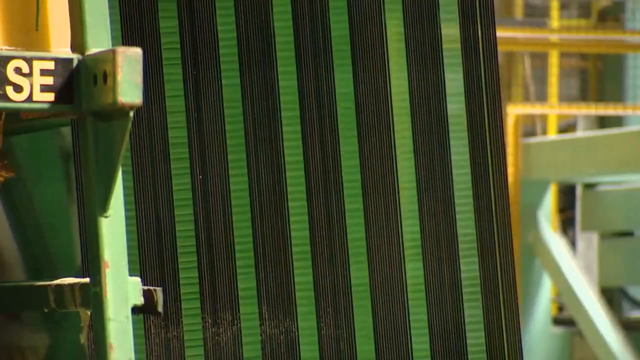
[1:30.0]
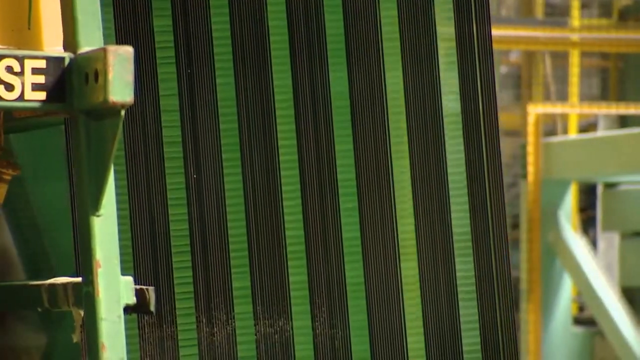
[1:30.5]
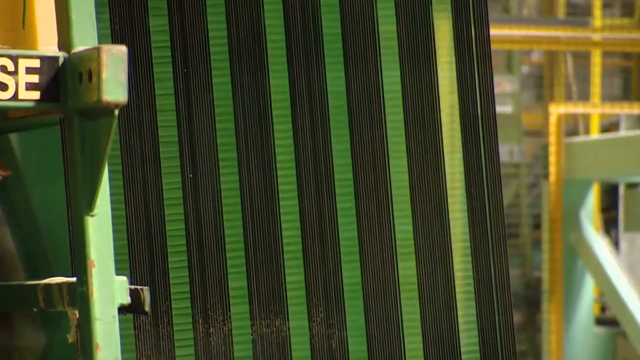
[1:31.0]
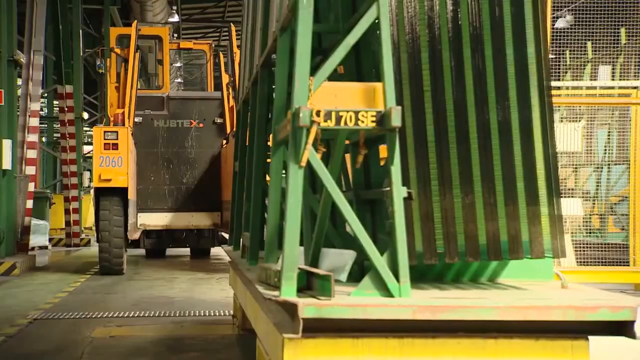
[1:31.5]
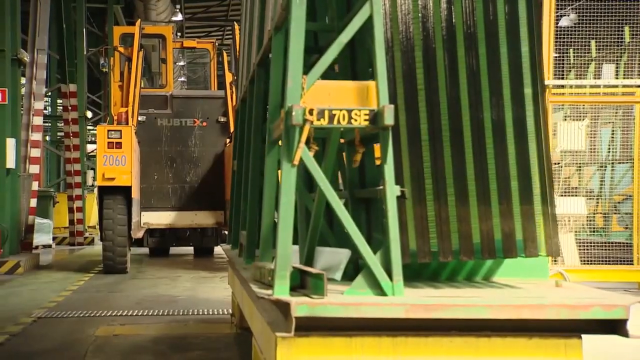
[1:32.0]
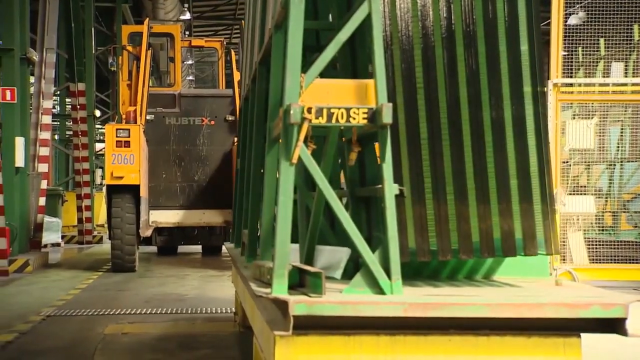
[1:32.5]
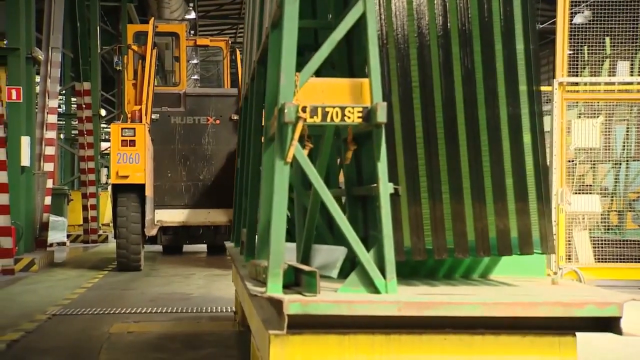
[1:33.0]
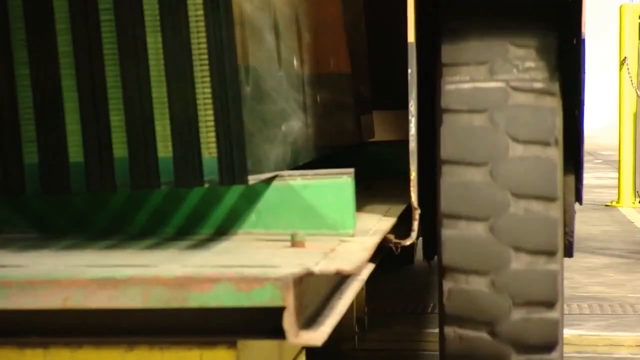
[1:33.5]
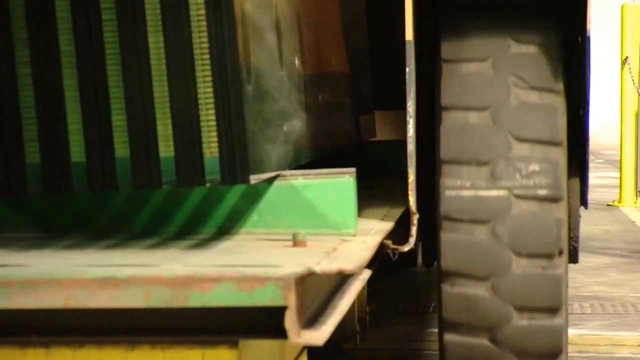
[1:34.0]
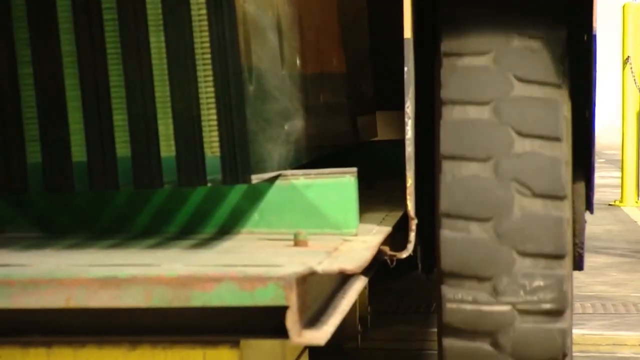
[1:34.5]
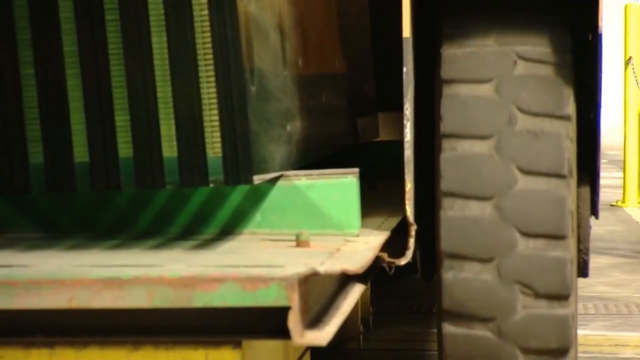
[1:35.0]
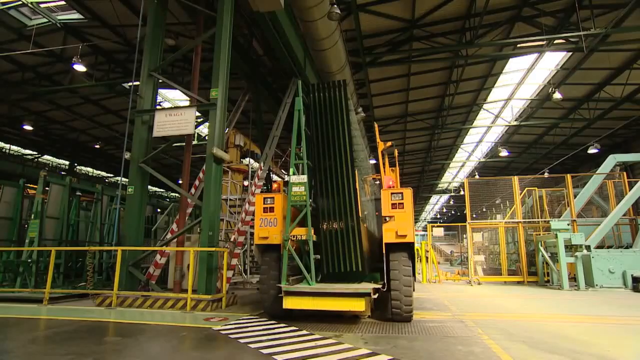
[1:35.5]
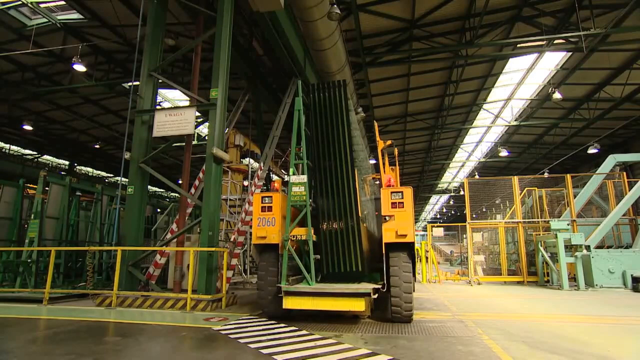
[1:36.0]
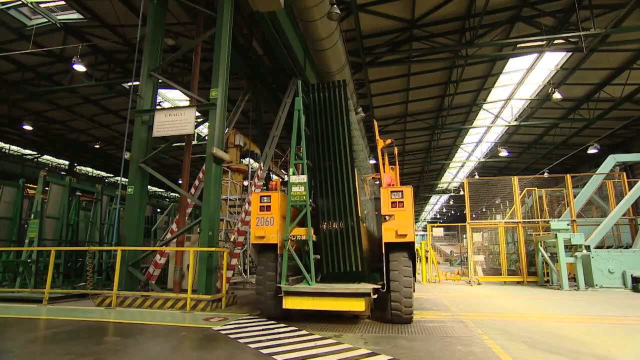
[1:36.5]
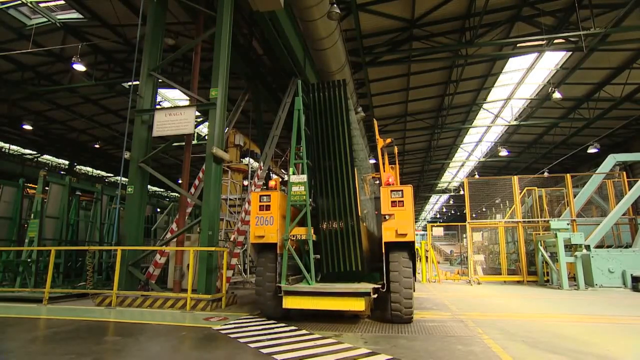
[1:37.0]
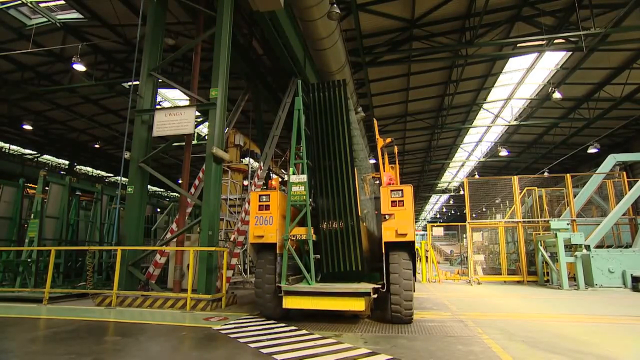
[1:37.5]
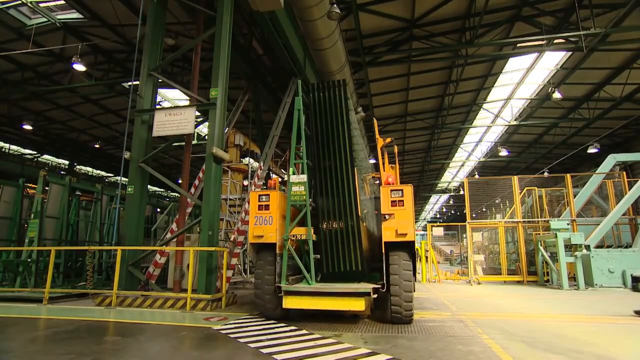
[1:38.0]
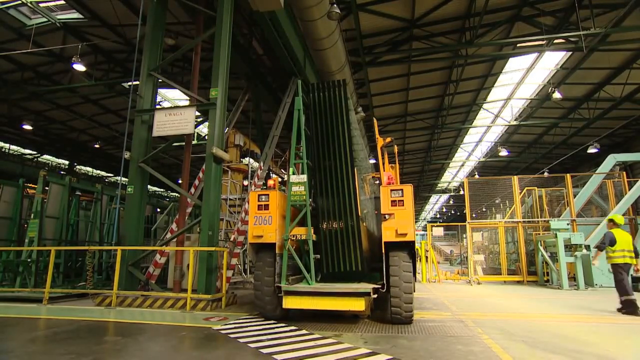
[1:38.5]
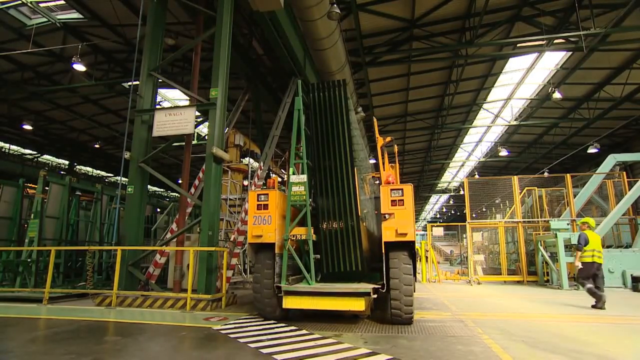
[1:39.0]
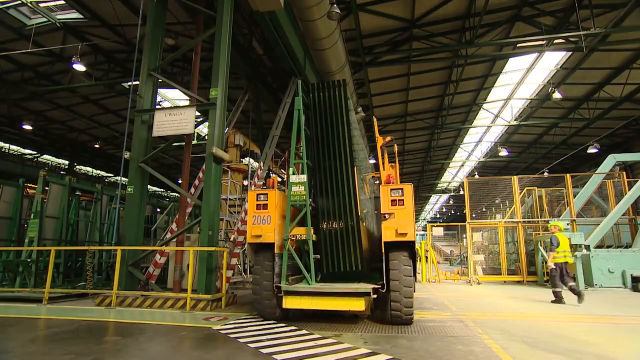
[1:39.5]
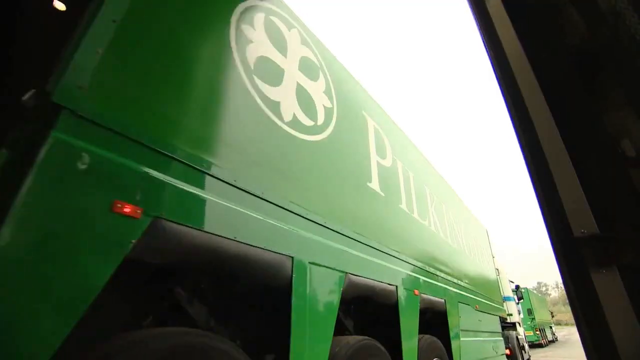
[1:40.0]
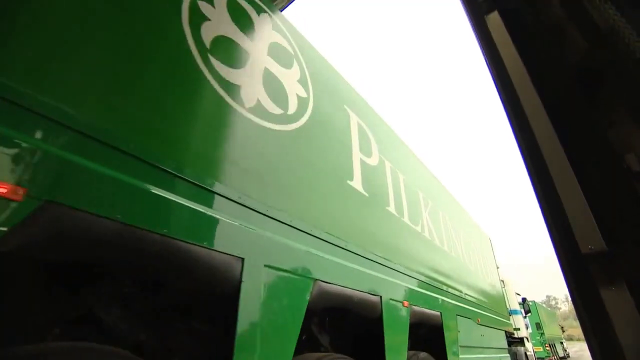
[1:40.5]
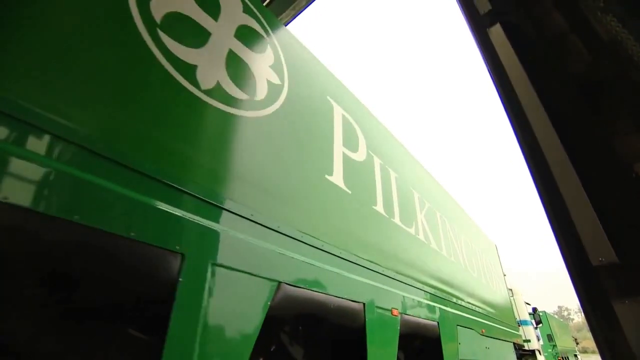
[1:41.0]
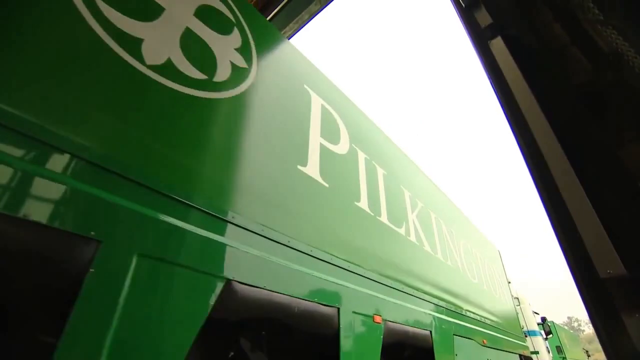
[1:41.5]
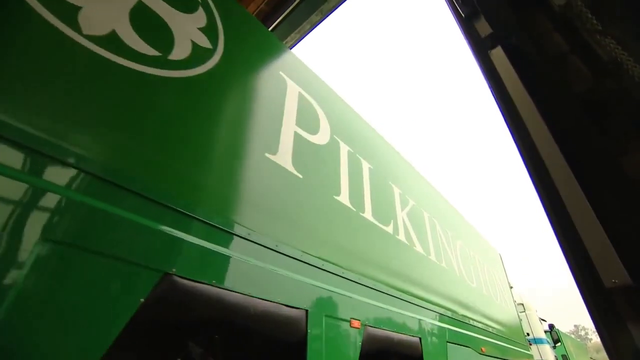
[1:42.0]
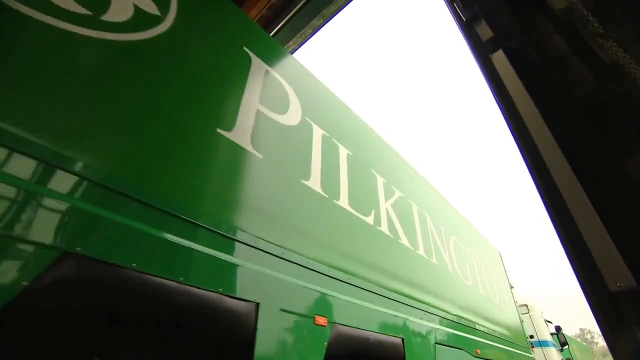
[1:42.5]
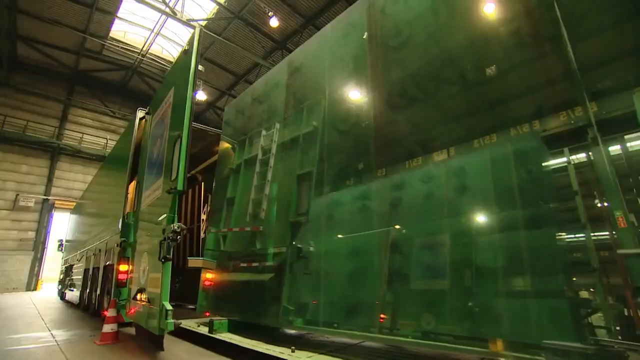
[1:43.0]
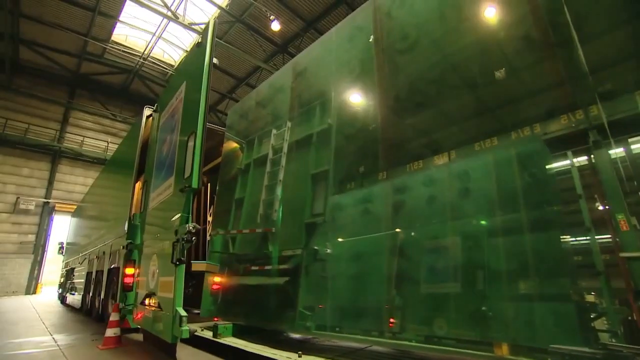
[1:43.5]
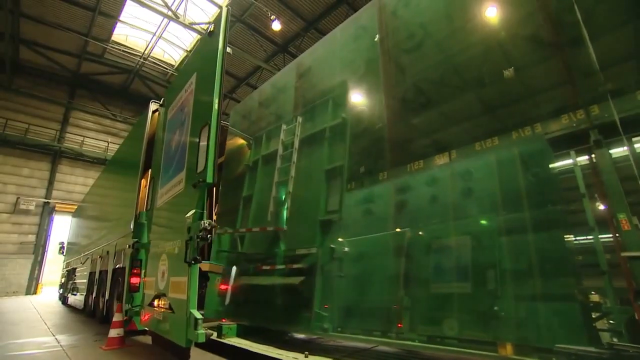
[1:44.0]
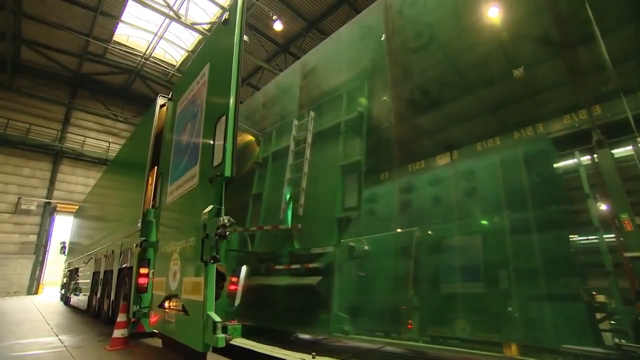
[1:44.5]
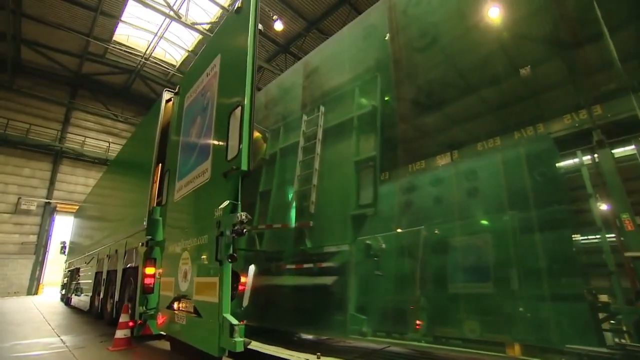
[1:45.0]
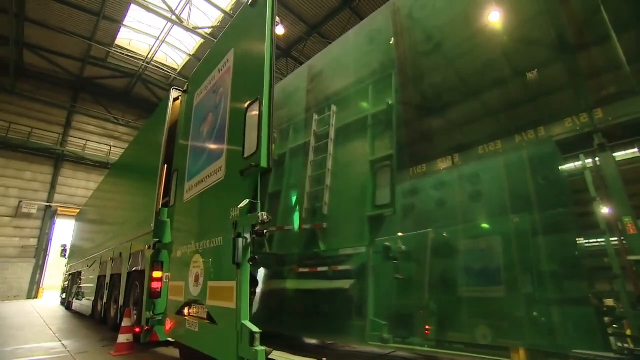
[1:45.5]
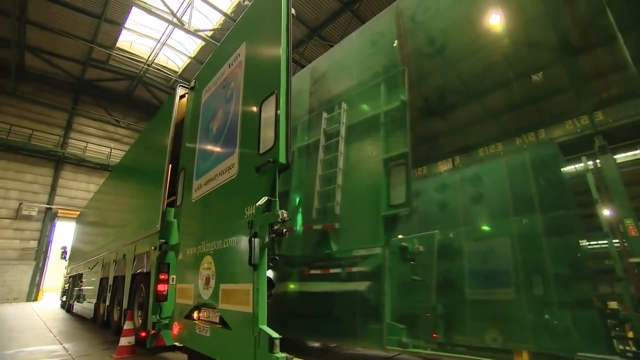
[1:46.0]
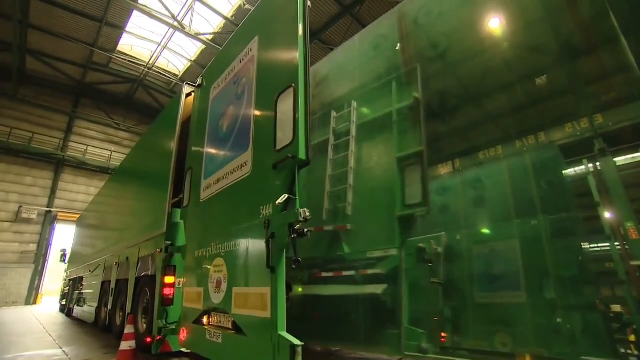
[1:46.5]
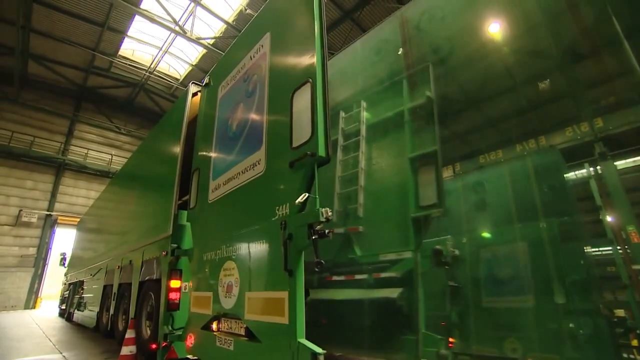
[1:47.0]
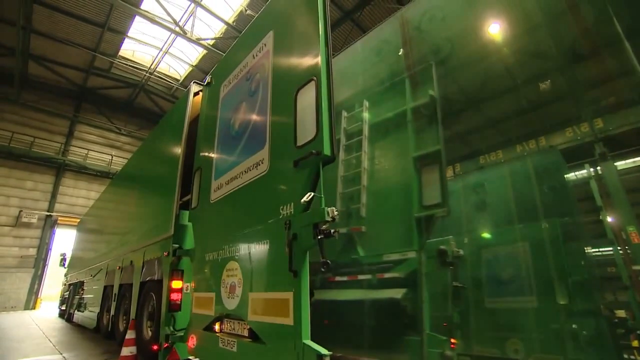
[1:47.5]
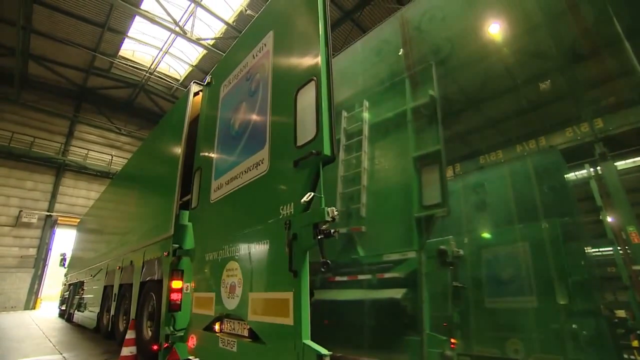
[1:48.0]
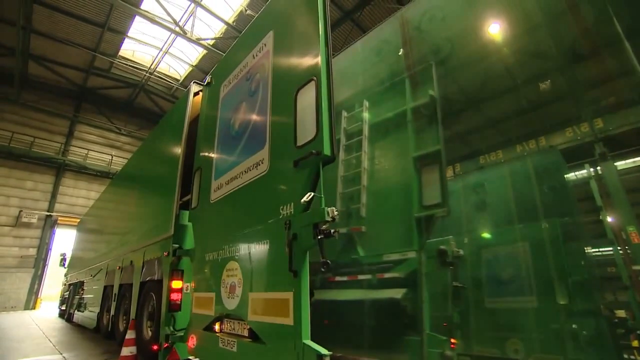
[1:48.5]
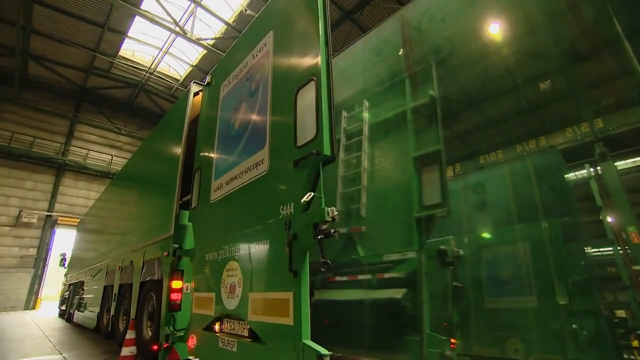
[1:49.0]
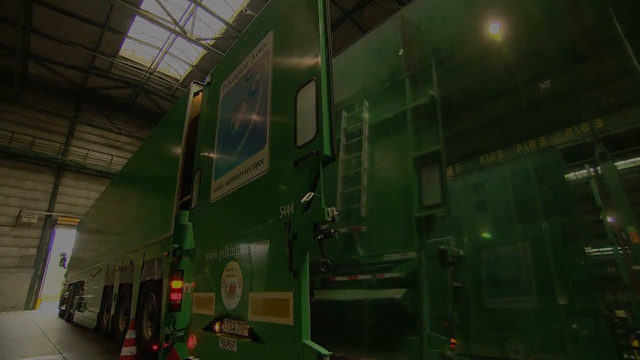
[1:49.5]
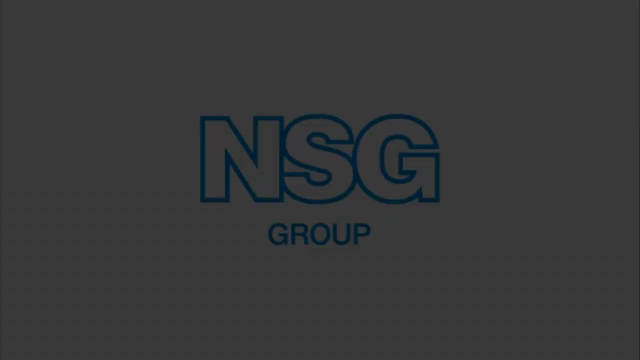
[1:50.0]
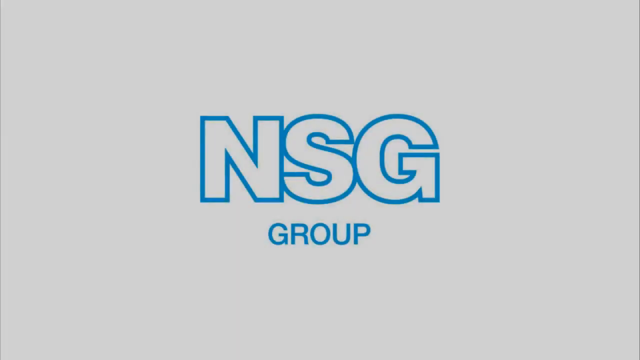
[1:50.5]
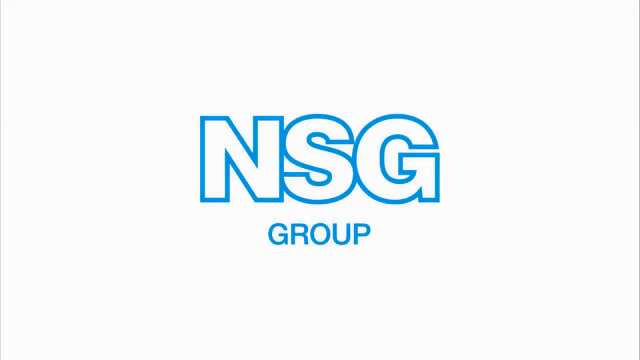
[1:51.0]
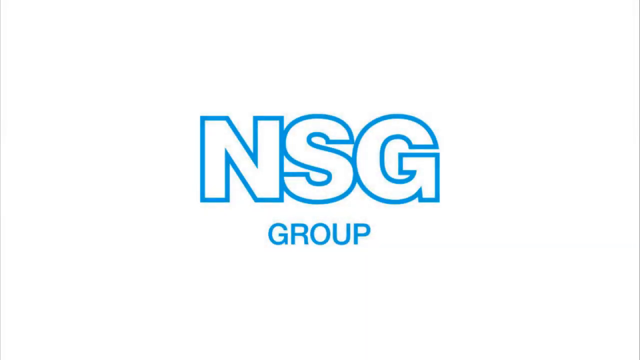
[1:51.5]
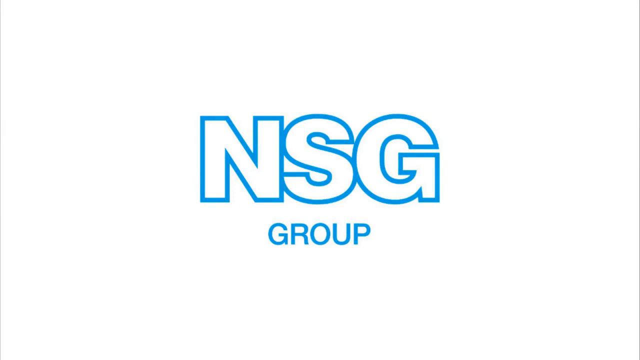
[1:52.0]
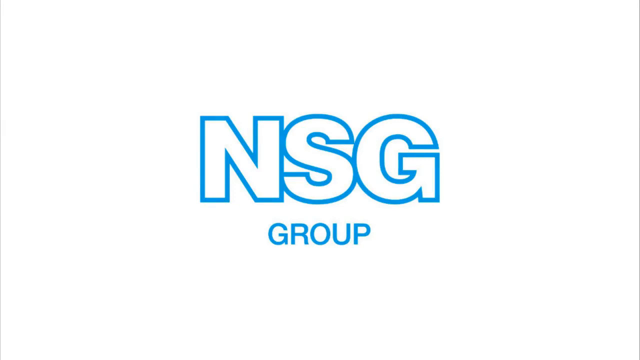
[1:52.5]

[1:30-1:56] The glass is transported by heavy machinery: a green heavy machine carrying pallets of glass on wheels is driven and pulled by a heavy-duty yellow machine with flashing lights. A man in protective gear walks across, inspecting the transportation of the glass. A large truck bearing the logo from the beginning of the video has the glass loaded into the back of its carriage. The video then transitions to a white background with blue and white text saying "NSG Group."